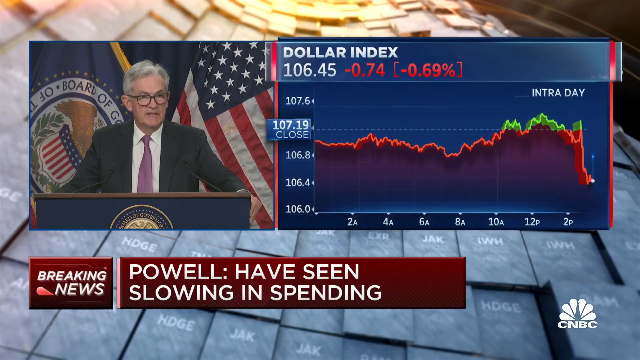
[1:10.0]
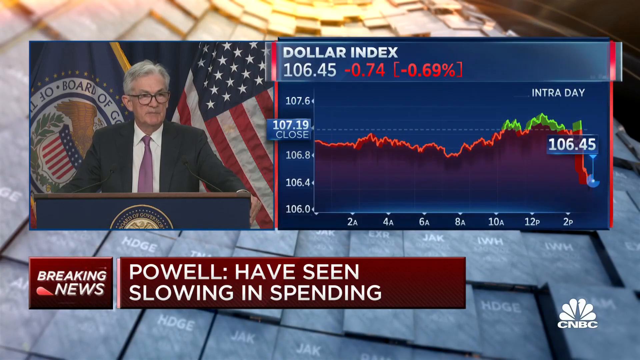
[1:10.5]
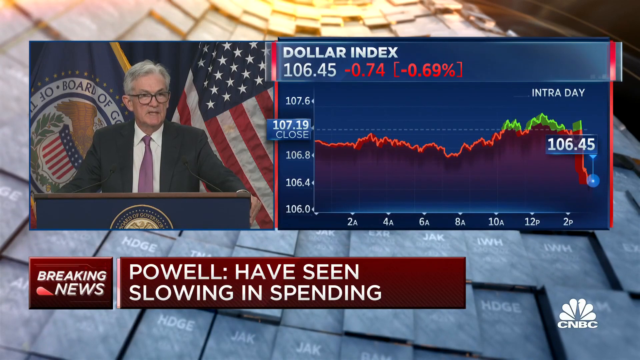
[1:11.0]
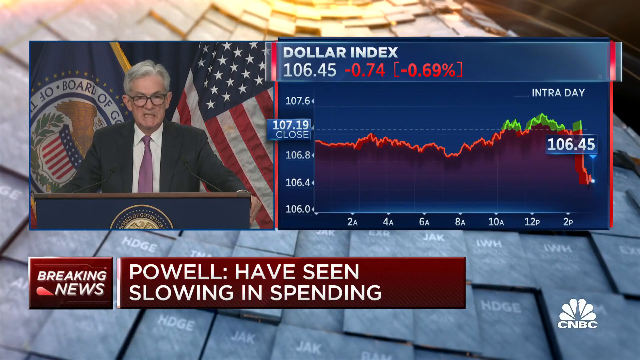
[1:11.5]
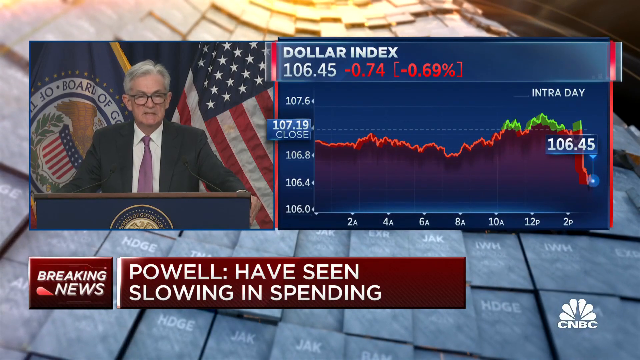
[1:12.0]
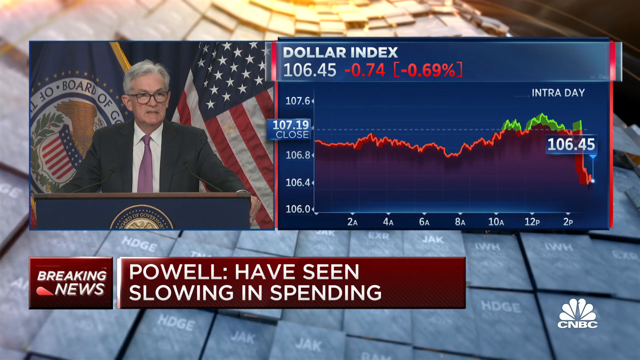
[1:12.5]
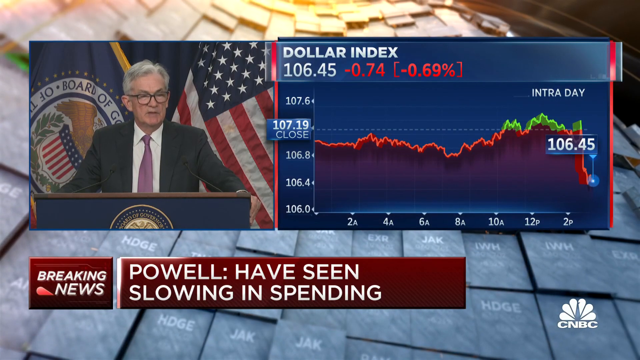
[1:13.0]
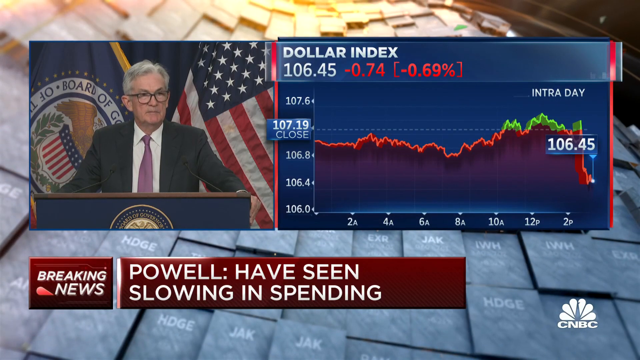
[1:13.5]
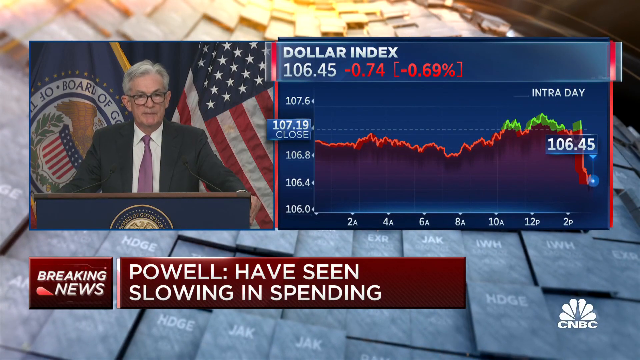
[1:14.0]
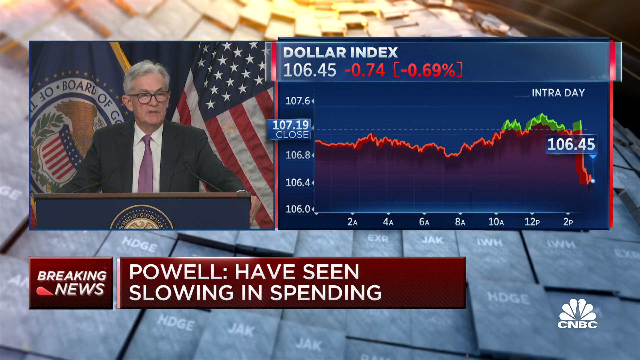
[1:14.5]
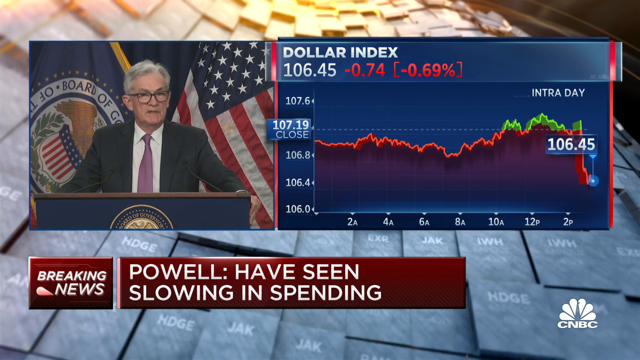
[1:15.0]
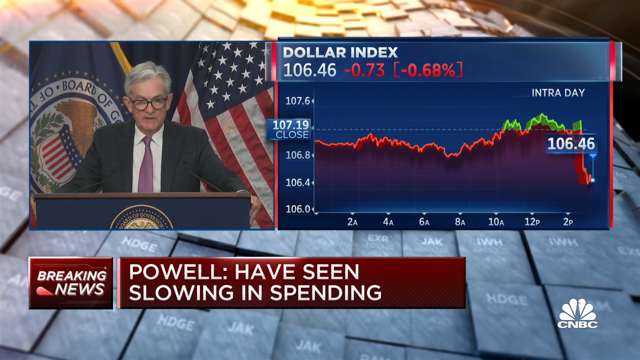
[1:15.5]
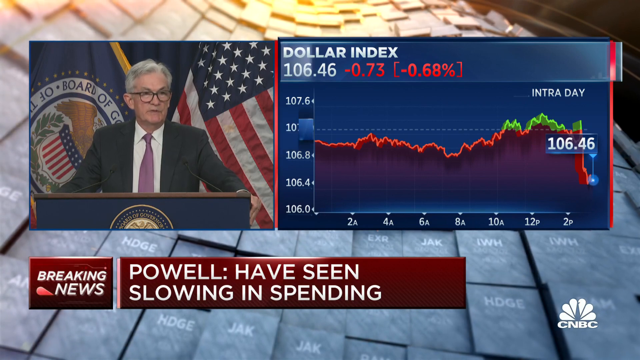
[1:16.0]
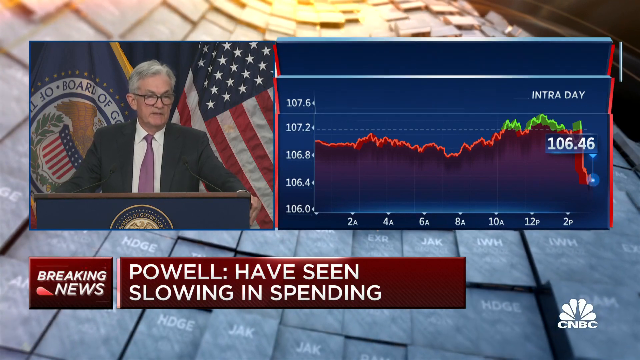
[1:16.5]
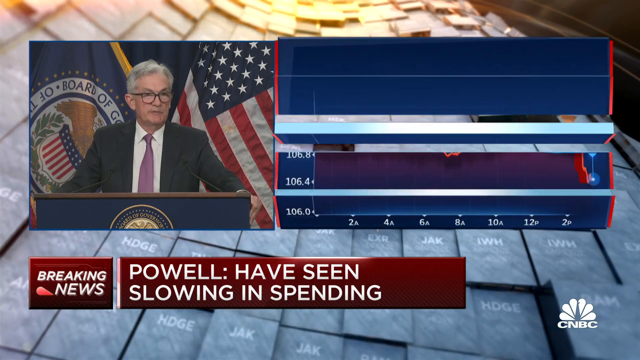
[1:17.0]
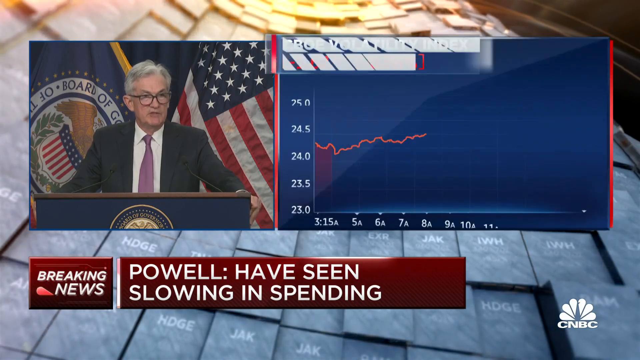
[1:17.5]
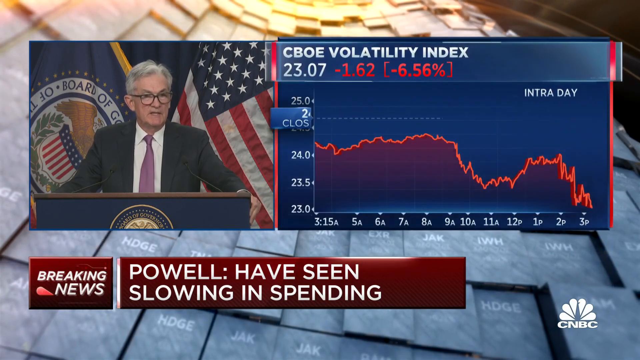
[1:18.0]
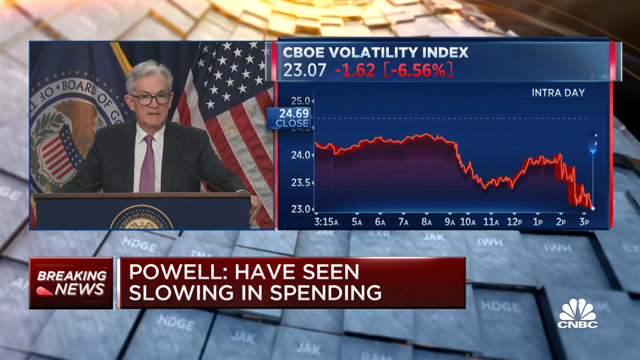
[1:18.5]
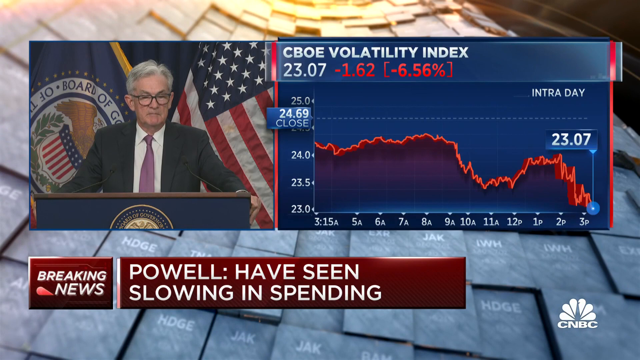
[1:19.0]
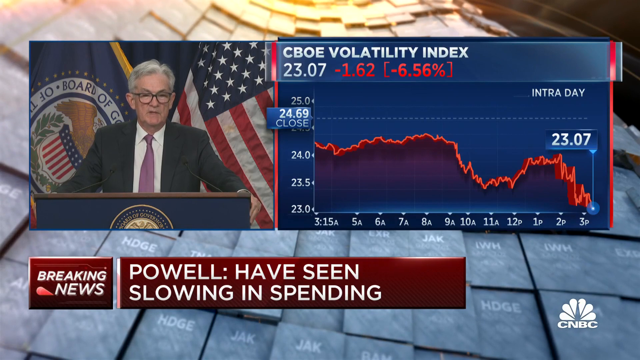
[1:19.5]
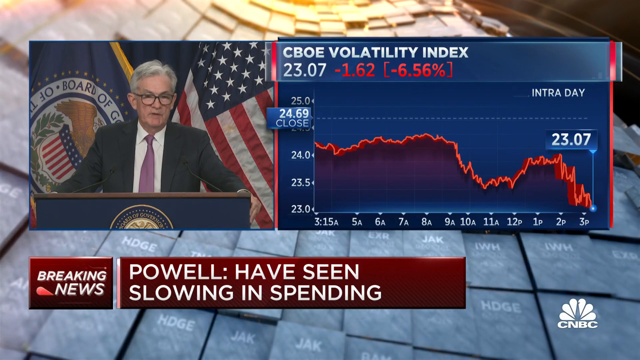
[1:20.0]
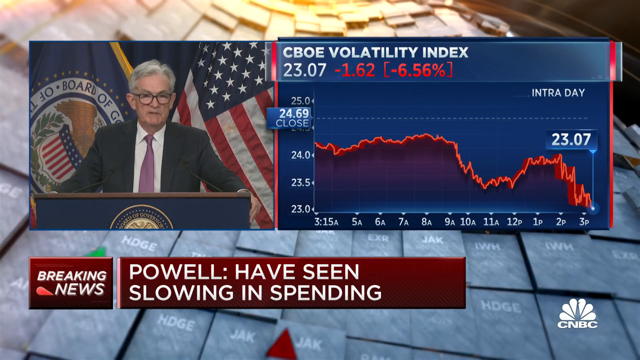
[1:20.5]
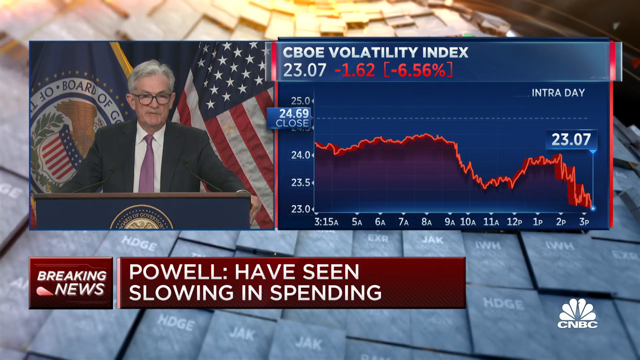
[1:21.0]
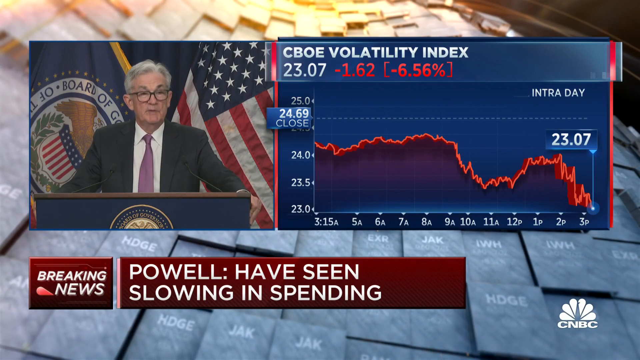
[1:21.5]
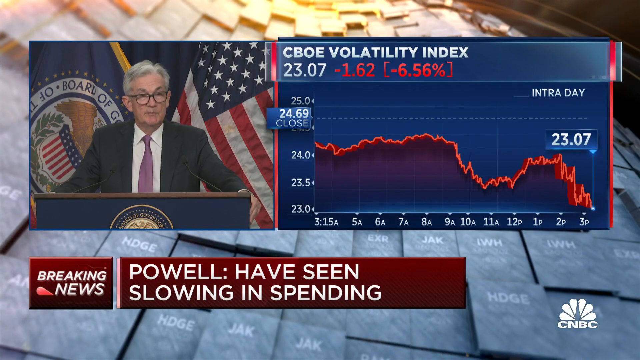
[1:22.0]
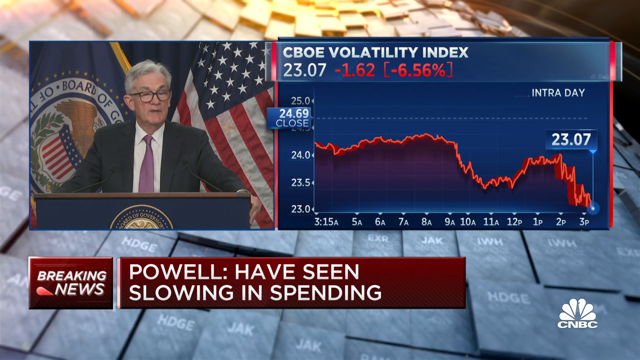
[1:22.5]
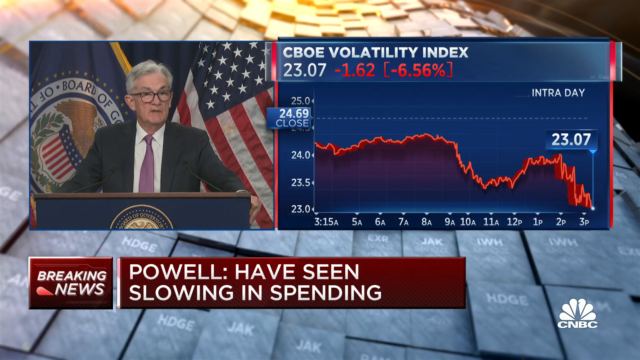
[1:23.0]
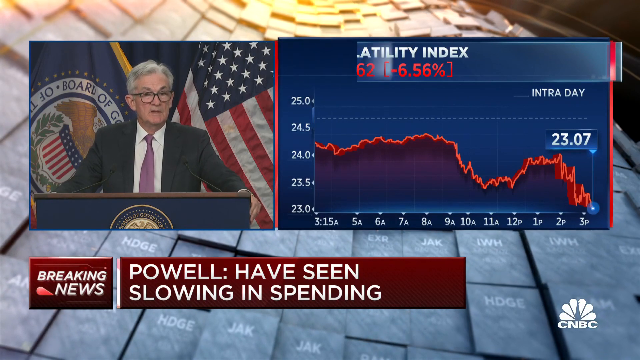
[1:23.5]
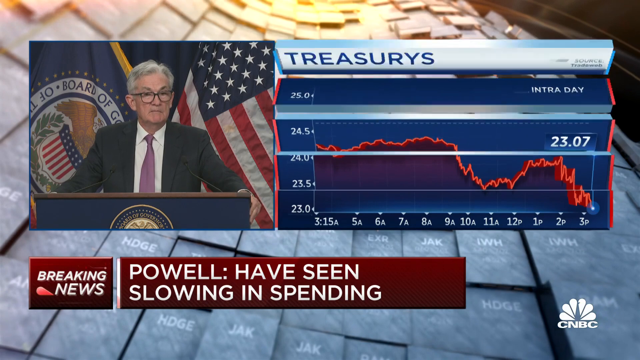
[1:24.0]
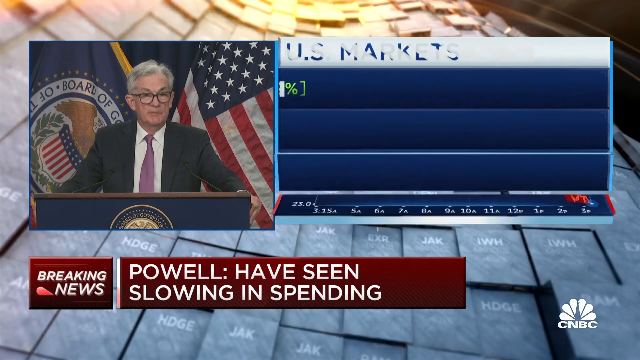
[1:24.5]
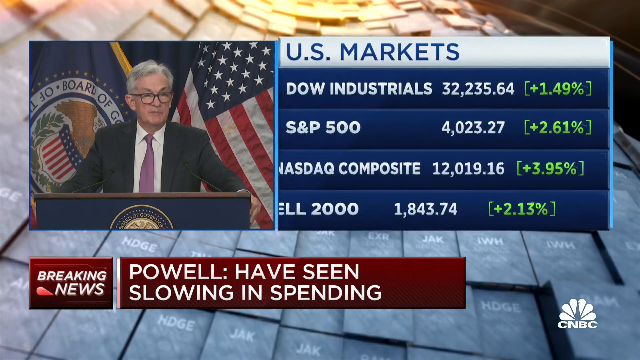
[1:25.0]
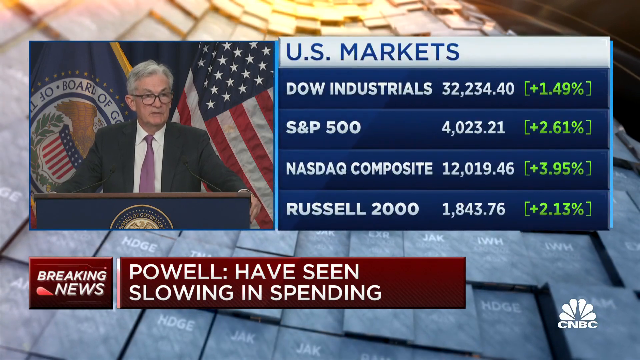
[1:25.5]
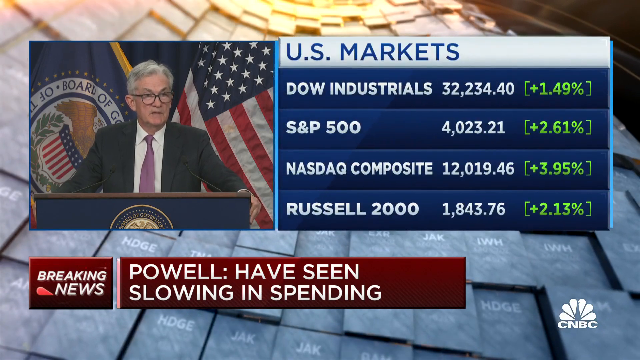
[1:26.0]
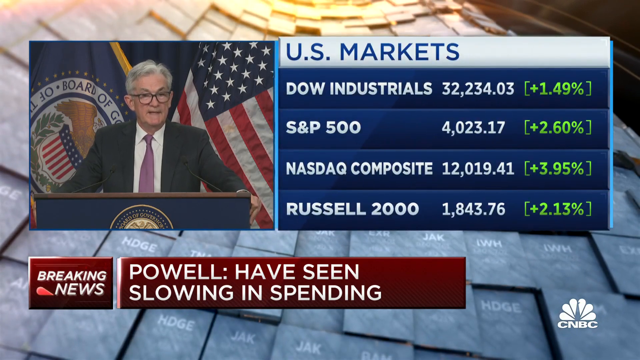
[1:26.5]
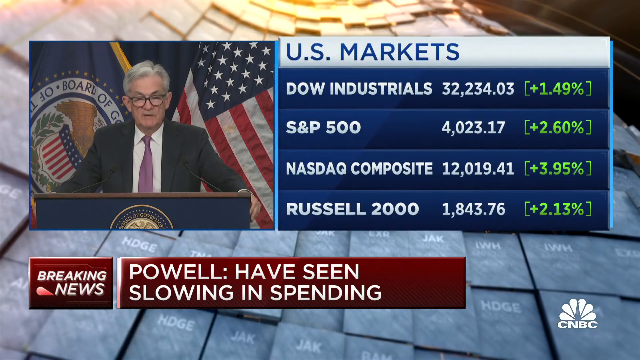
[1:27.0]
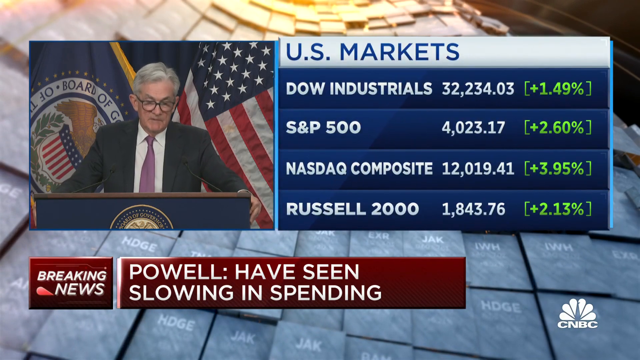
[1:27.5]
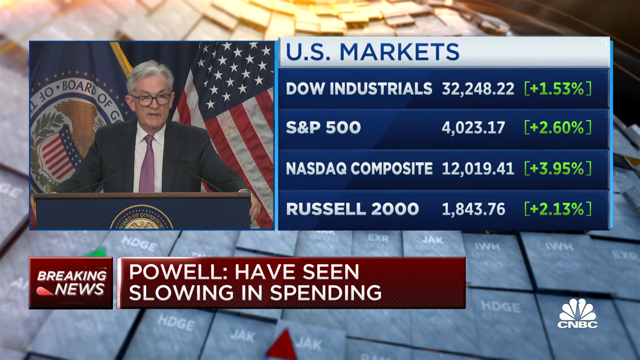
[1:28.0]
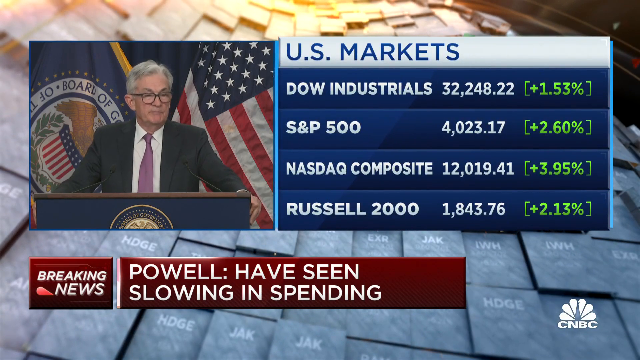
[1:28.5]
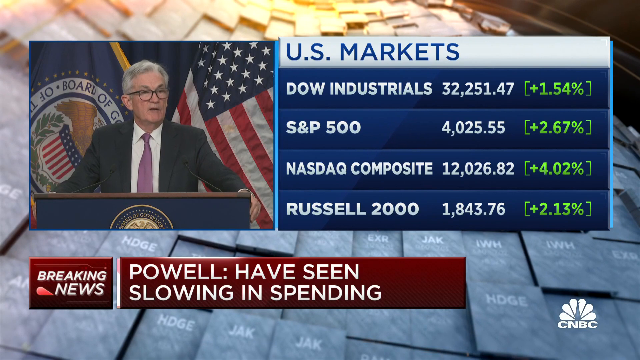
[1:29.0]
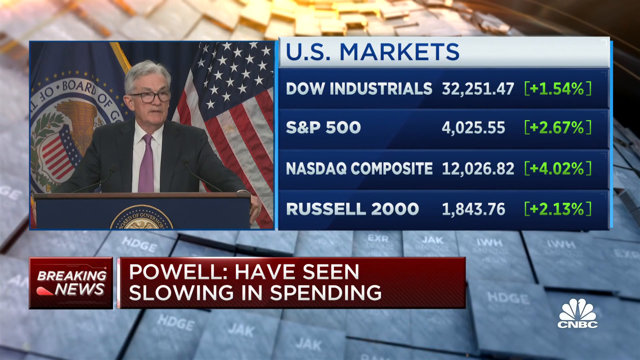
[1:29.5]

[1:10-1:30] Ticker tapes give a live view of the market, showing the drop across all the bonds. The focus is on the two-year treasury note, the five-year treasury note, the 10-year note and the 30-year bond. A statement reads that recession is a broad-based decline. The 30-year T bond is the only one that is positive. The segment is labeled breaking news.